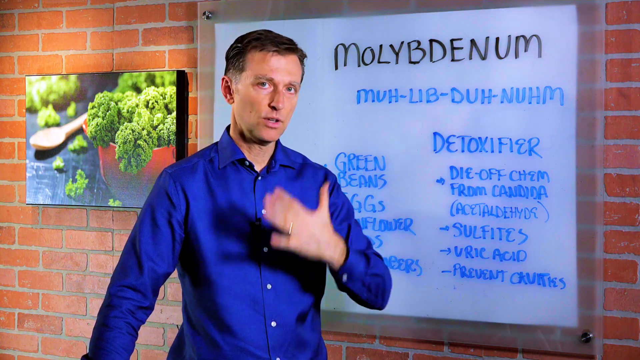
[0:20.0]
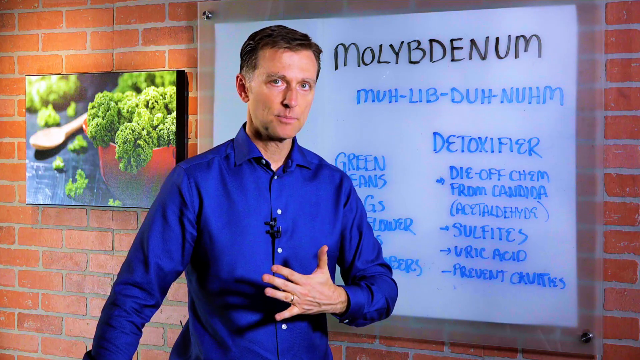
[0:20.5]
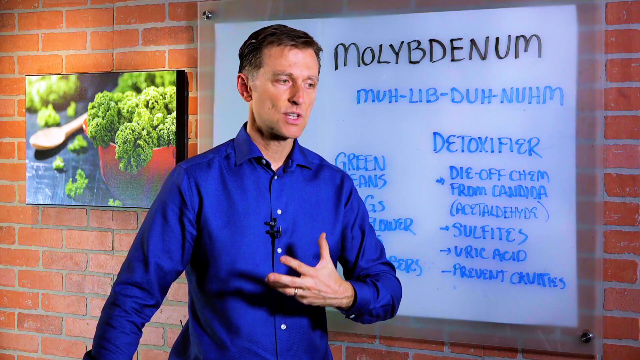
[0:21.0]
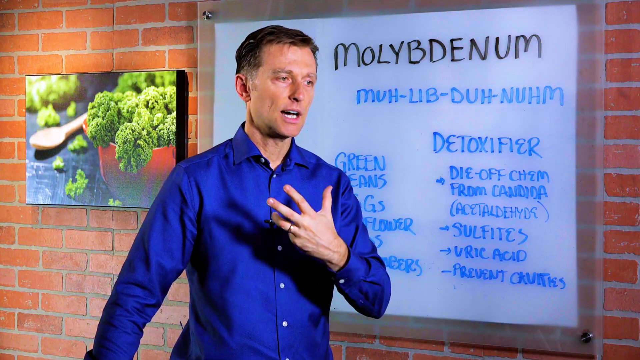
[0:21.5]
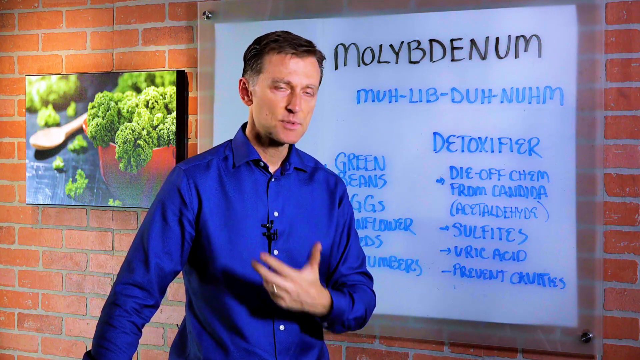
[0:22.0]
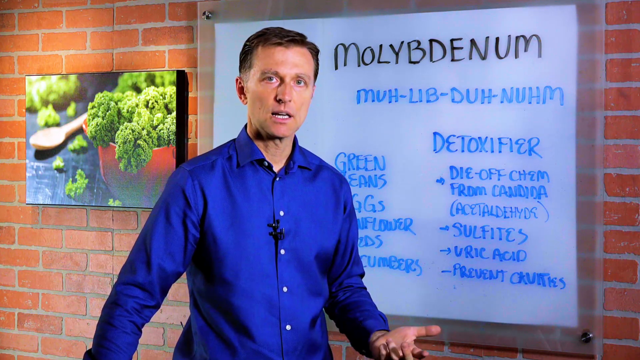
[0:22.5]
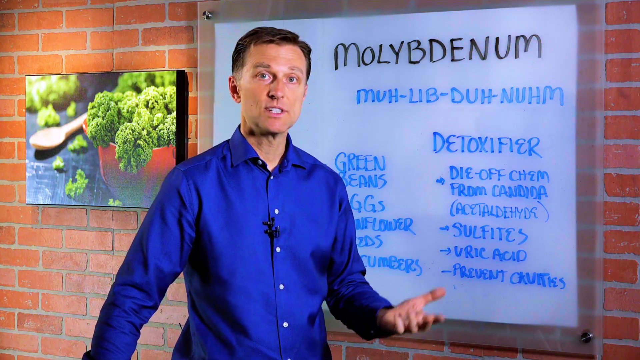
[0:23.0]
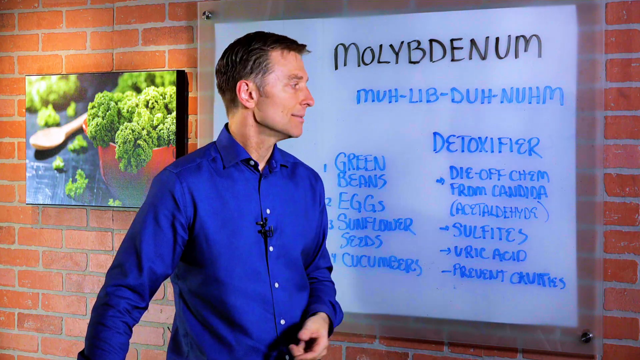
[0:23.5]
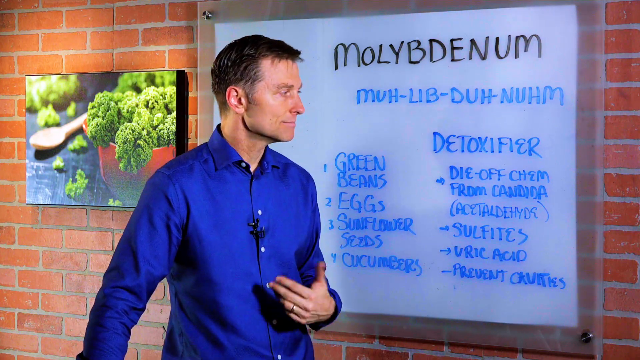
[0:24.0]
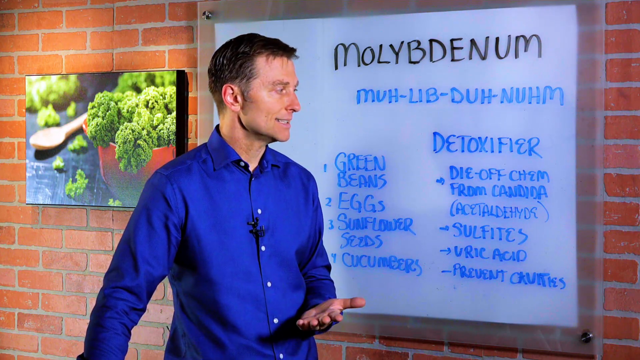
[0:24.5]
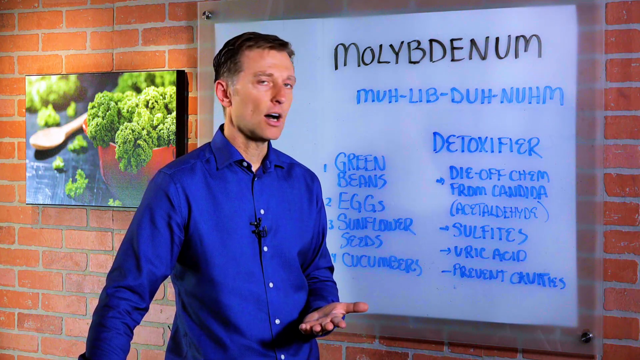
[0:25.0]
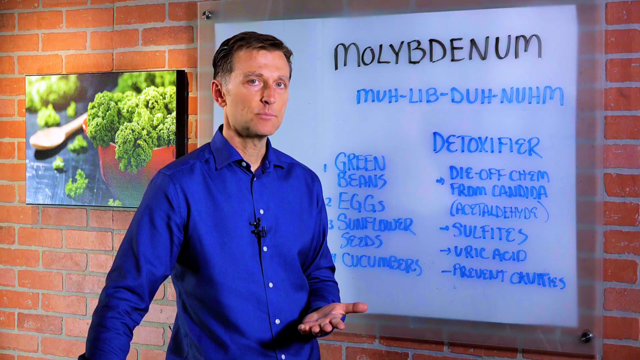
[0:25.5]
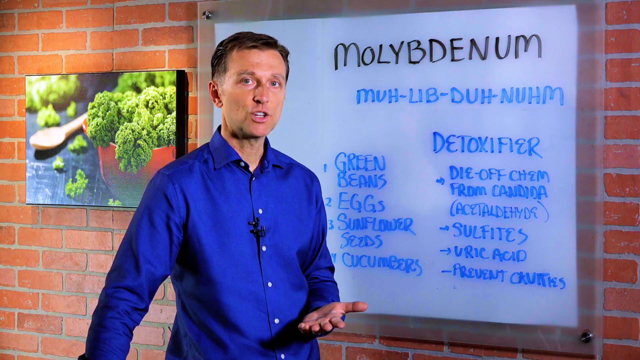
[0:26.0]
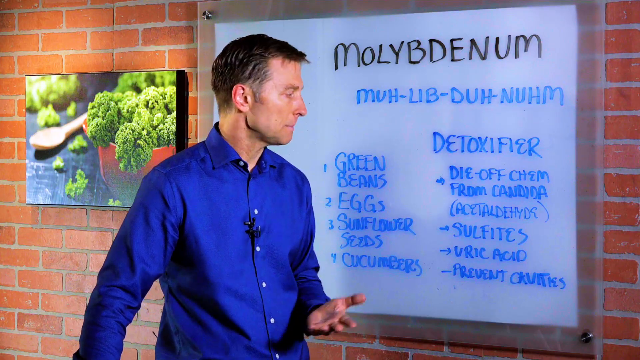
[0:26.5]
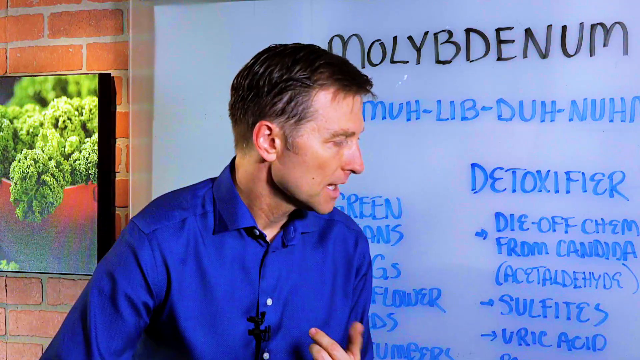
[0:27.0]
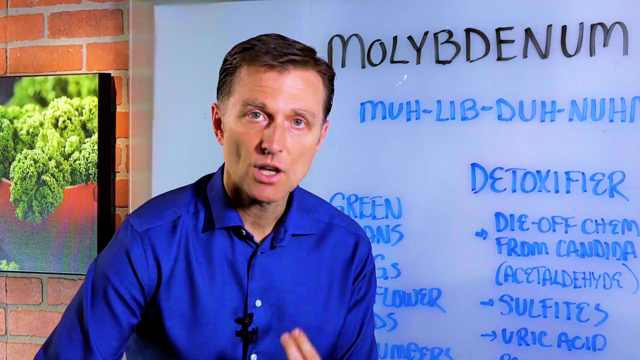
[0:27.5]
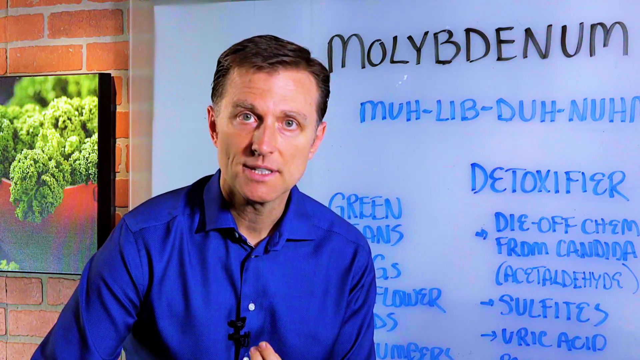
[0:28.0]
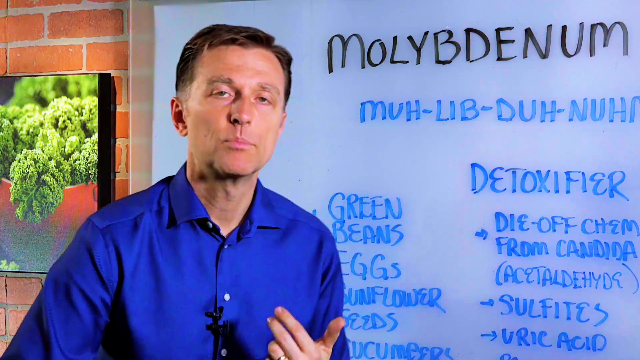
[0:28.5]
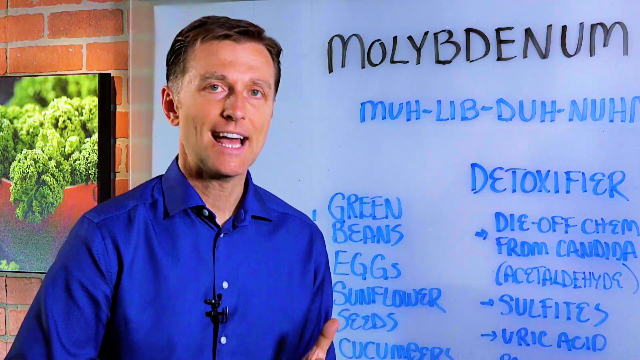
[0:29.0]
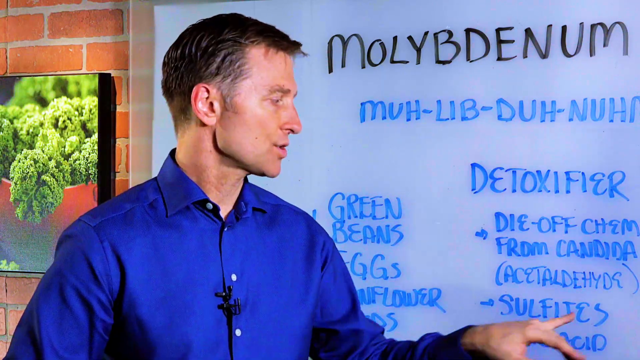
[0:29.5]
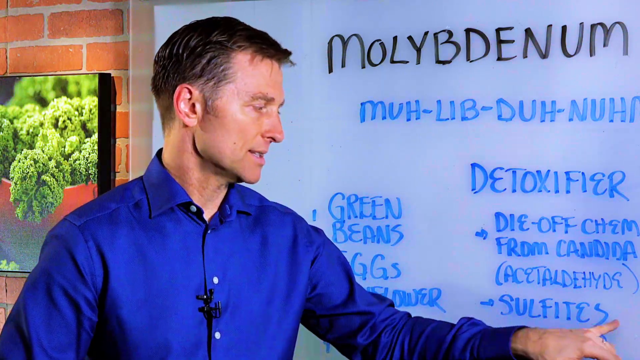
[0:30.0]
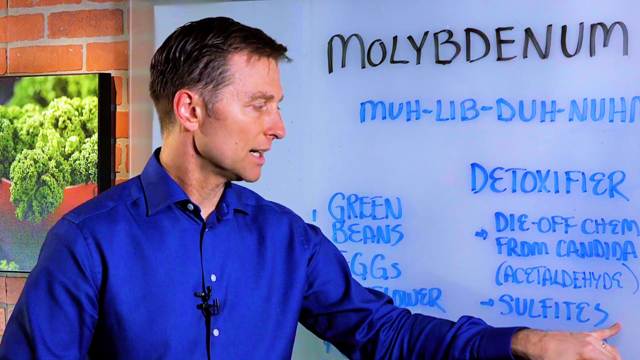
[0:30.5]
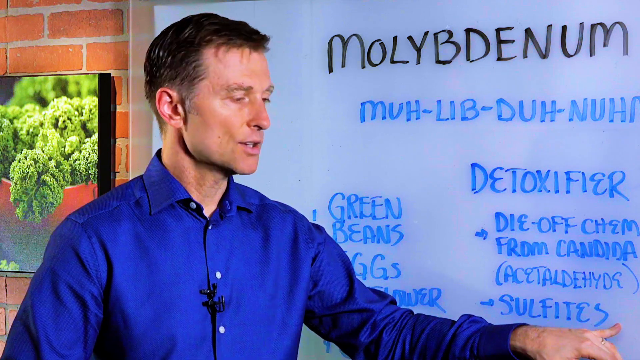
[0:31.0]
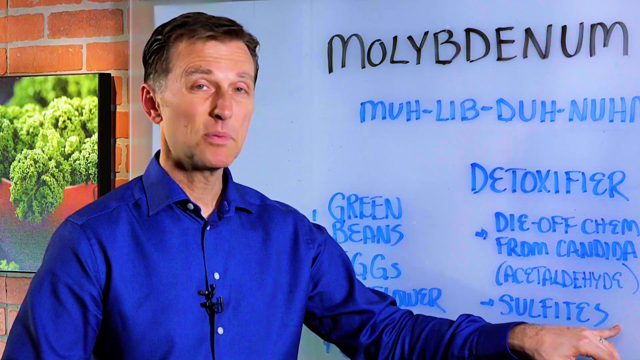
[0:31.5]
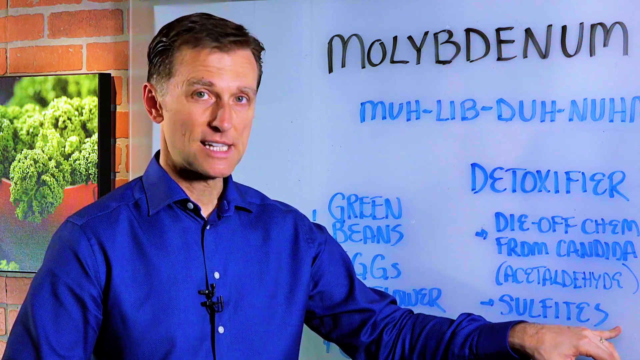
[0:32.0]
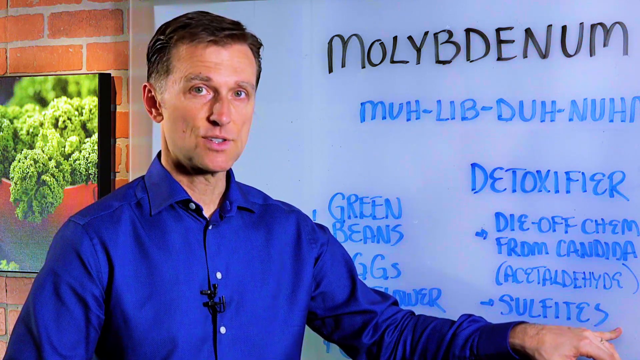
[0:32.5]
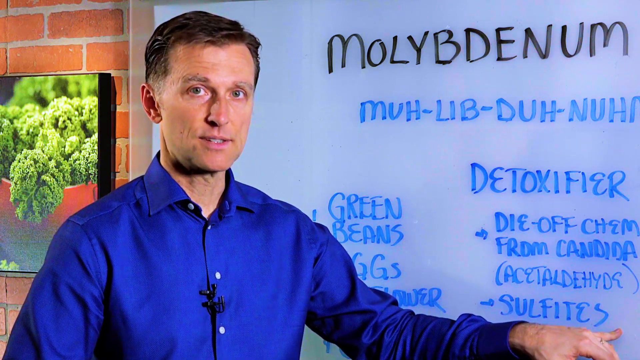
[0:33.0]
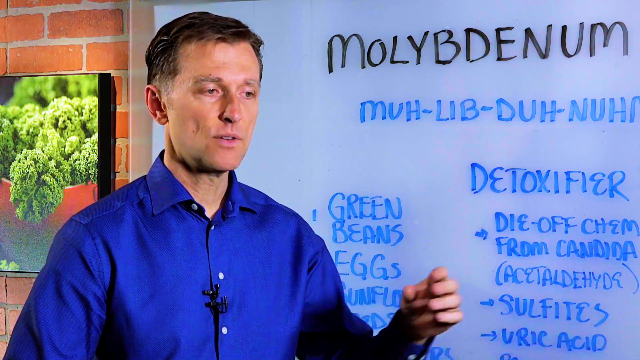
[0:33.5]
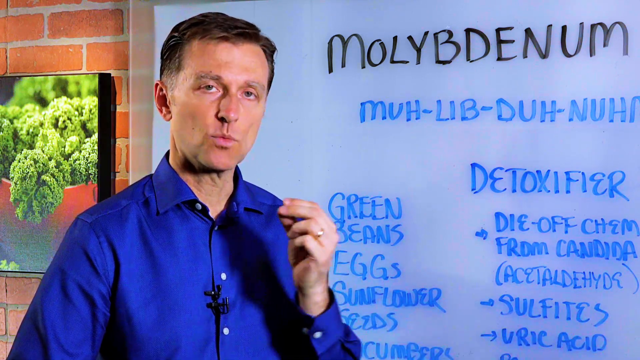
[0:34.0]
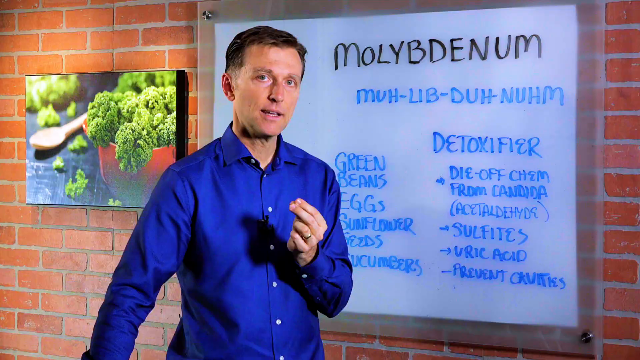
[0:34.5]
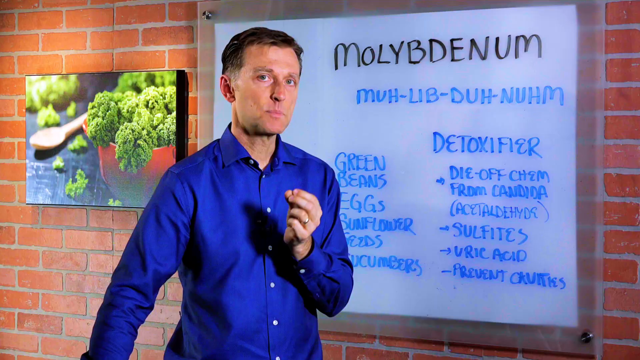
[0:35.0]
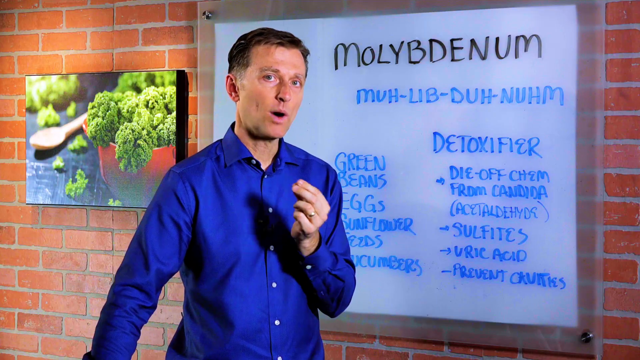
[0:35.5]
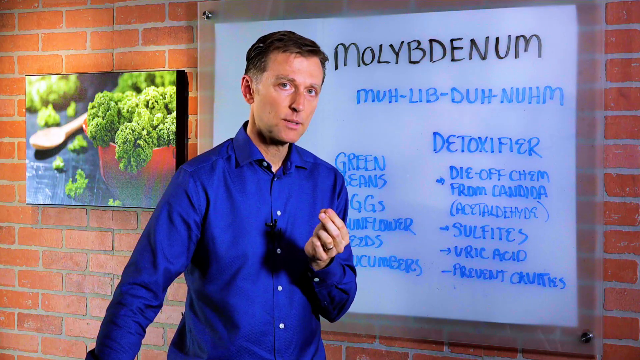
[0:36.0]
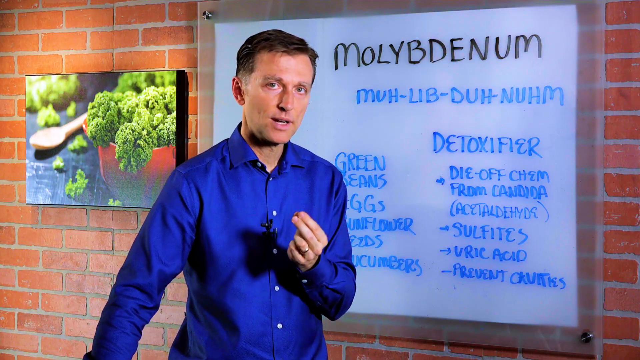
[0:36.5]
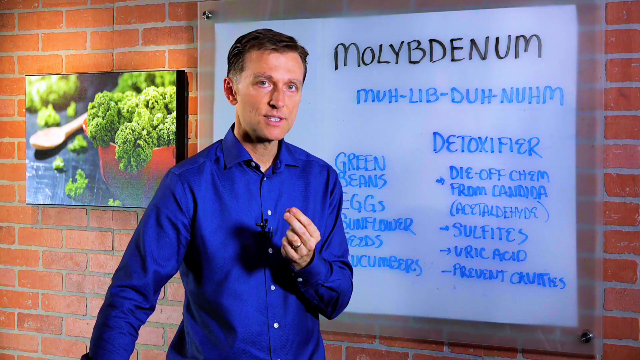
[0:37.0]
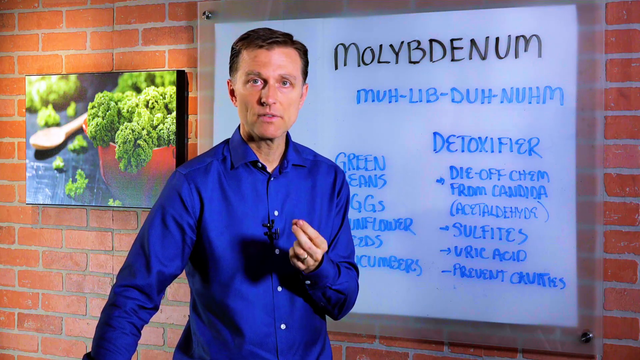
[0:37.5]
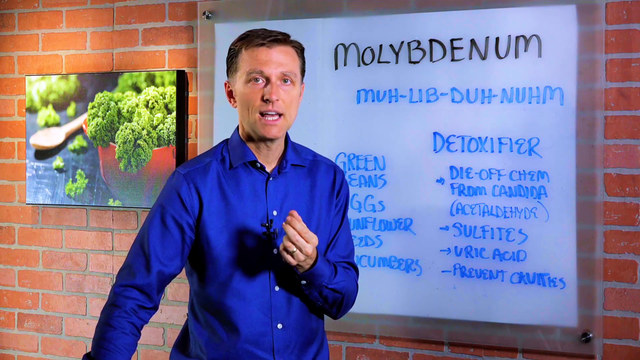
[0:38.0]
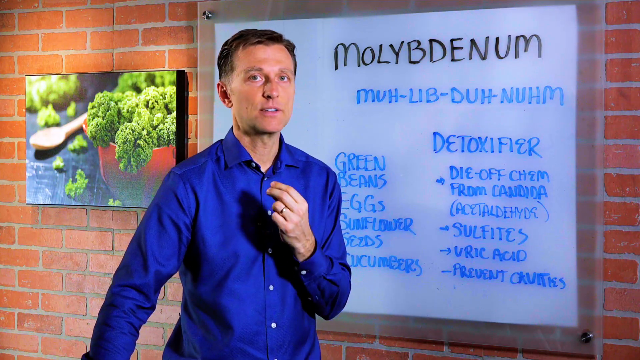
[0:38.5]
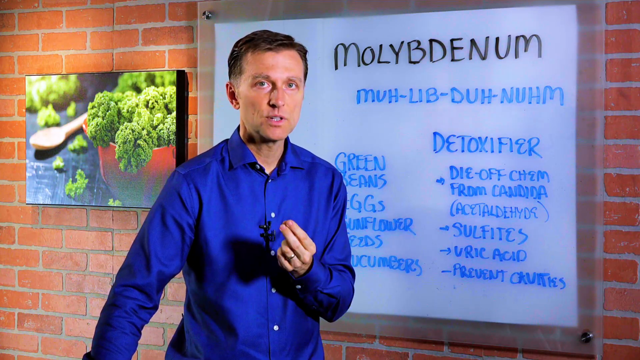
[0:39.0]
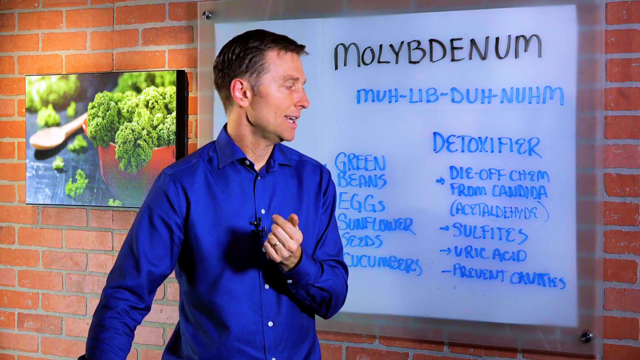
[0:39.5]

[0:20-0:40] The male in the blue shirt talks to the camera, his palm open with fingers spread apart, facing himself. His arm moves down to hip level and rests, and he makes gesturing motions with his left hand. The shot then zooms in on him, so only a partial view of the screen behind him is visible. He extends his left hand and points towards one of the items on the right side of the screen, moving his head to look towards it before focusing on the camera again. He makes a pinching motion with his left hand and moves his hand further up his body. With his elbow bent, he keeps talking to the camera while the camera zooms out to the original shot. The lighting is quite strong, and the shadow of his hand and forearm is visible on his shirt.